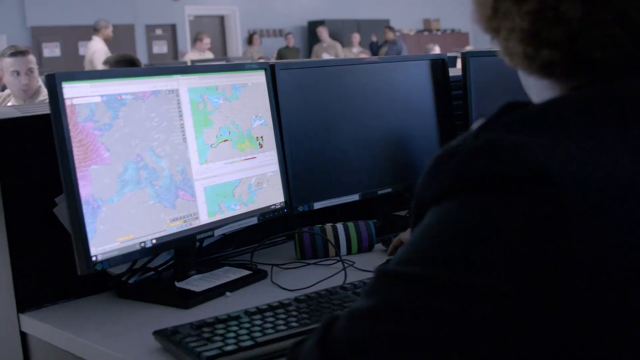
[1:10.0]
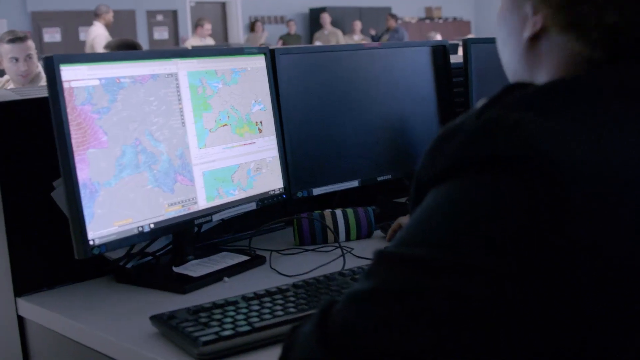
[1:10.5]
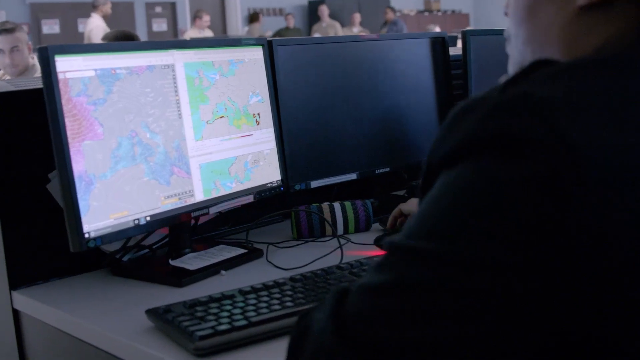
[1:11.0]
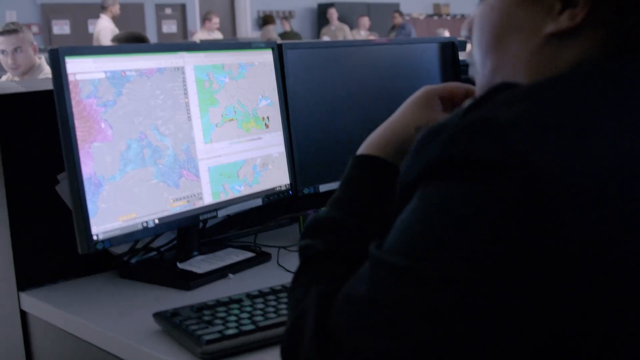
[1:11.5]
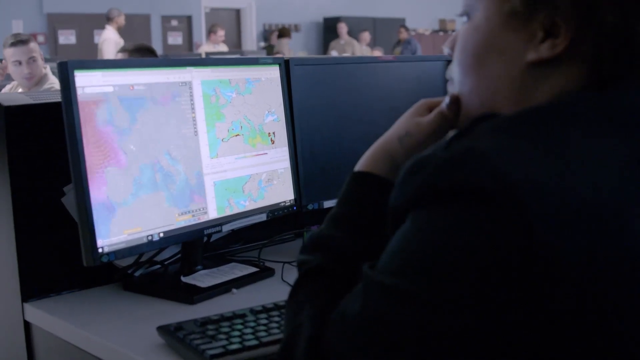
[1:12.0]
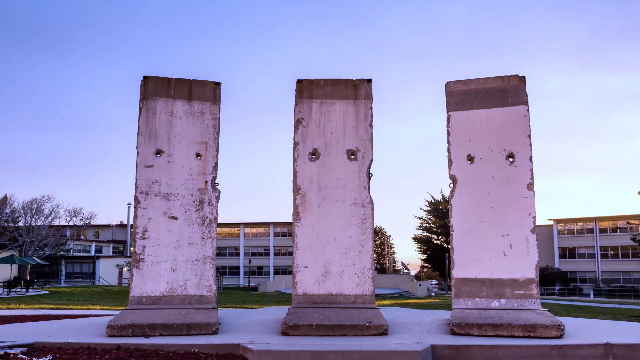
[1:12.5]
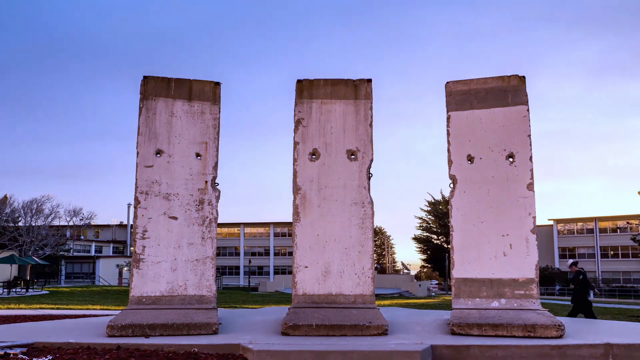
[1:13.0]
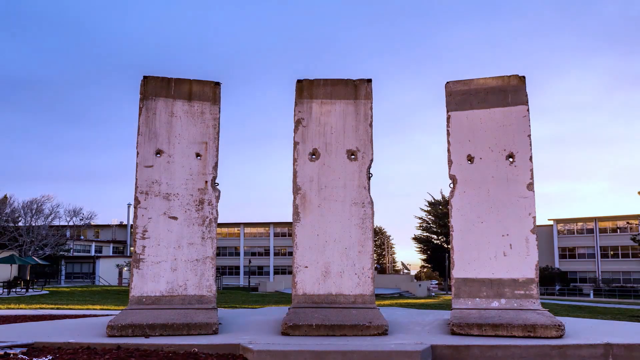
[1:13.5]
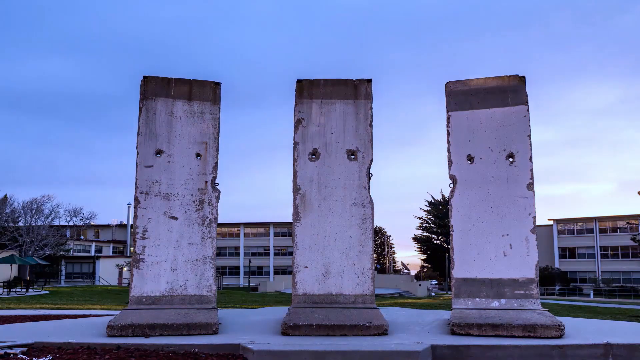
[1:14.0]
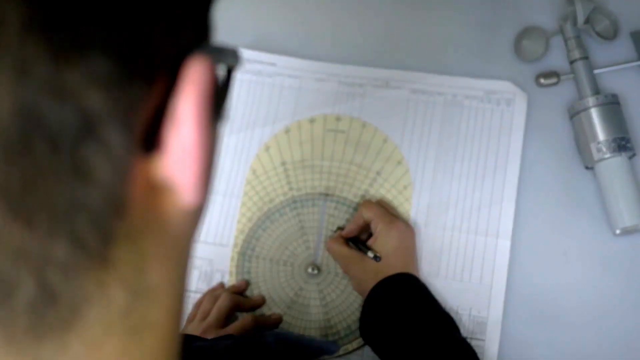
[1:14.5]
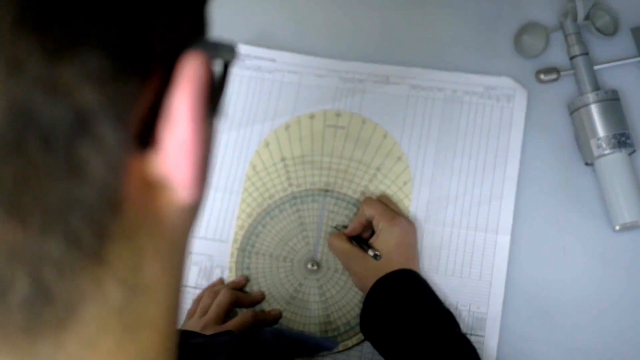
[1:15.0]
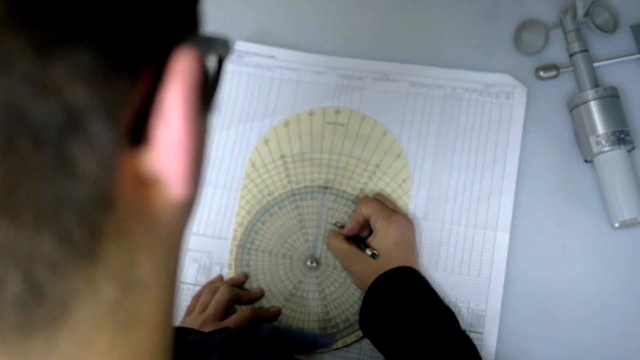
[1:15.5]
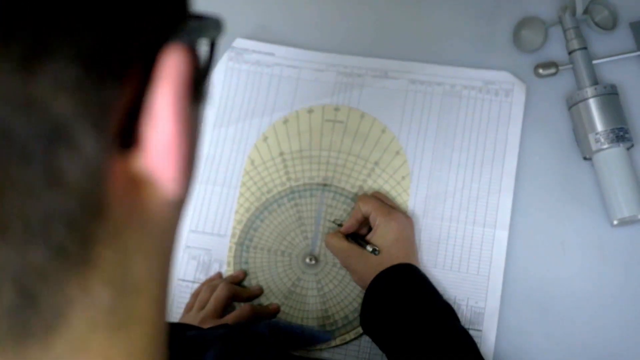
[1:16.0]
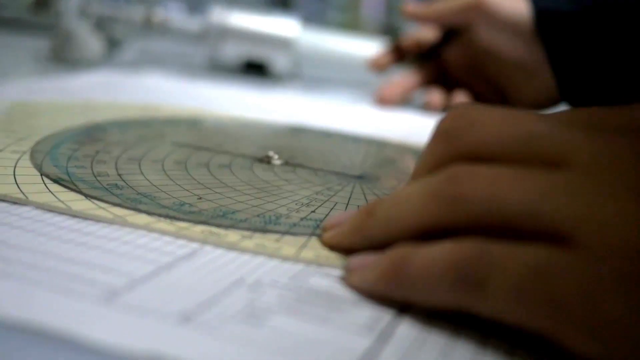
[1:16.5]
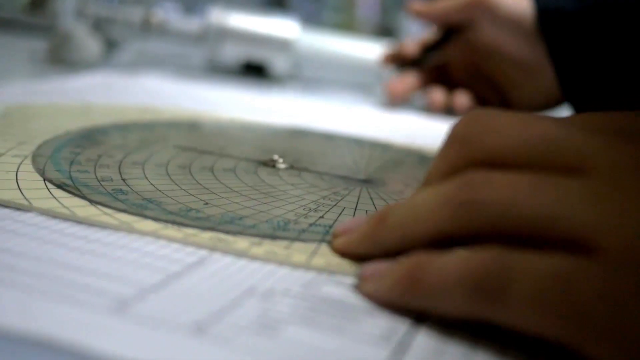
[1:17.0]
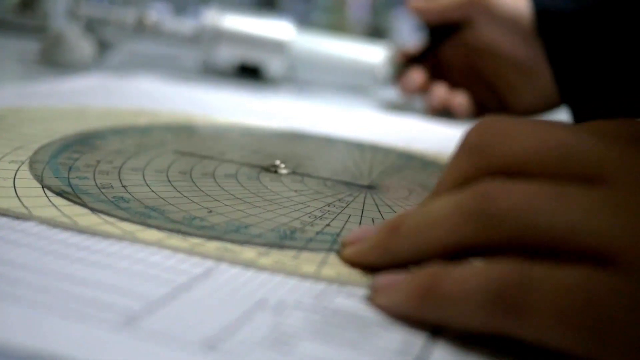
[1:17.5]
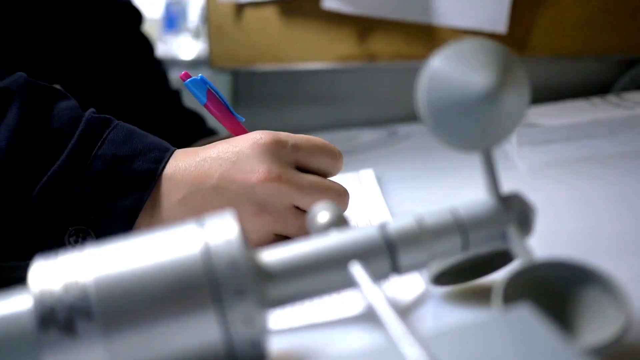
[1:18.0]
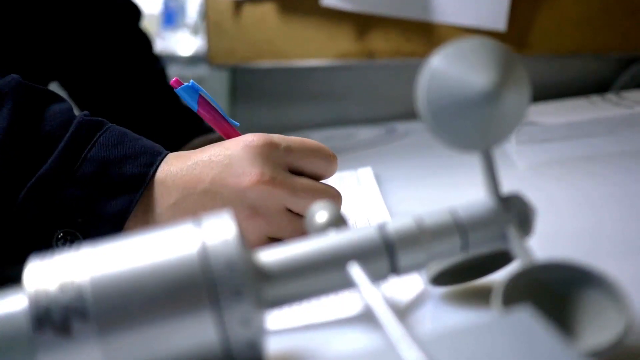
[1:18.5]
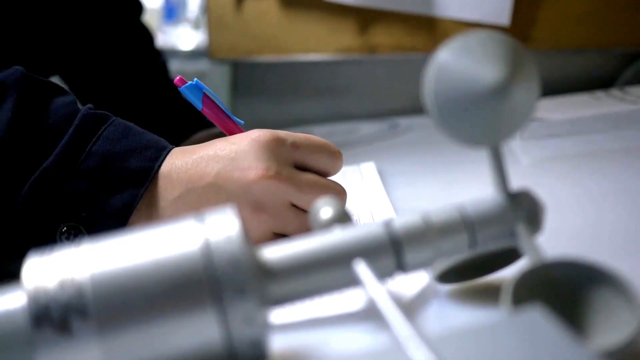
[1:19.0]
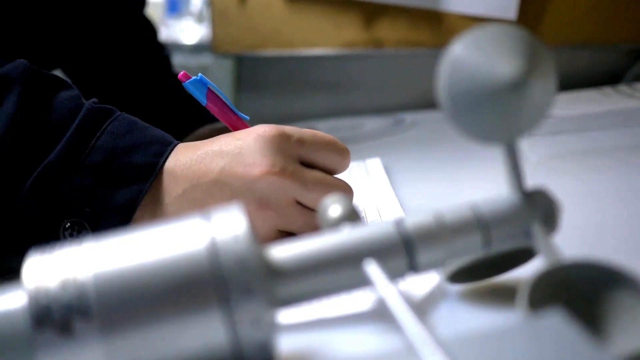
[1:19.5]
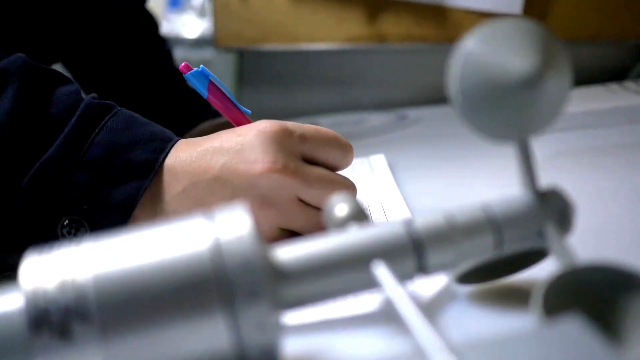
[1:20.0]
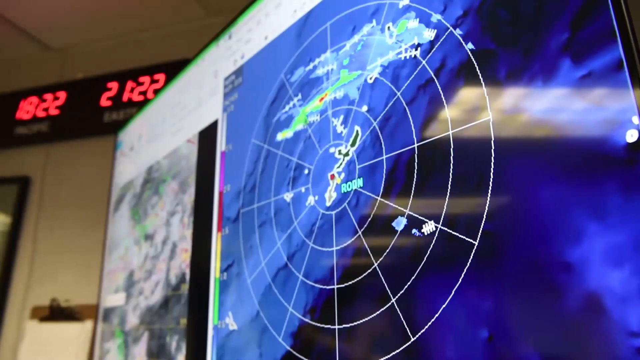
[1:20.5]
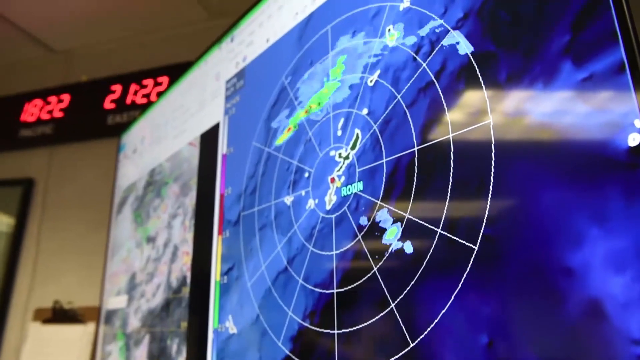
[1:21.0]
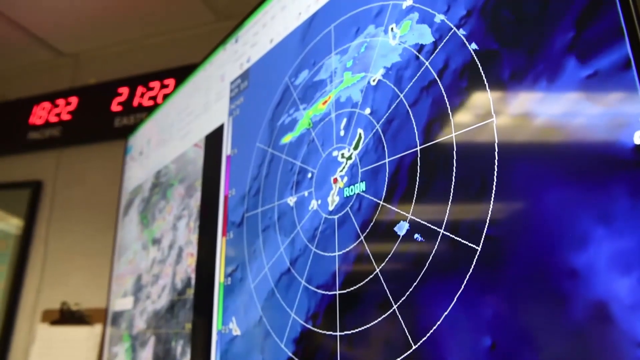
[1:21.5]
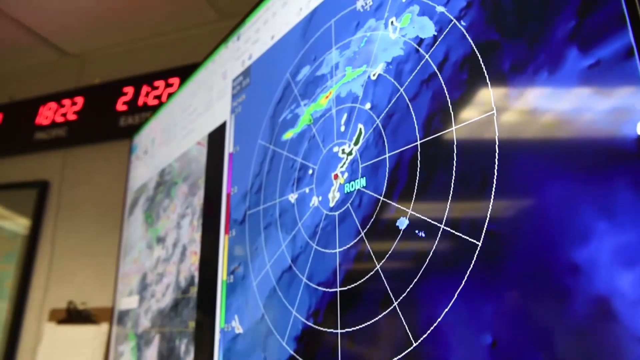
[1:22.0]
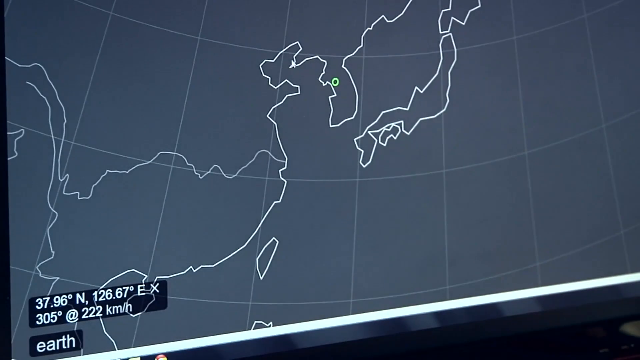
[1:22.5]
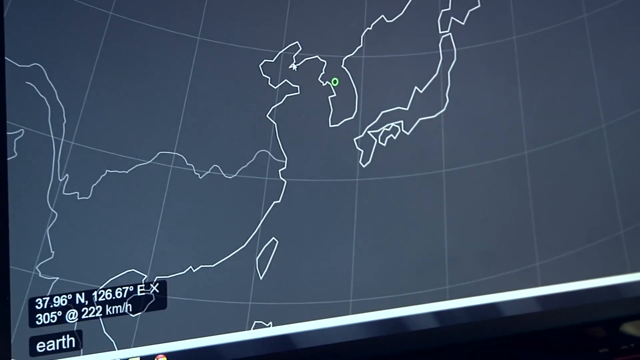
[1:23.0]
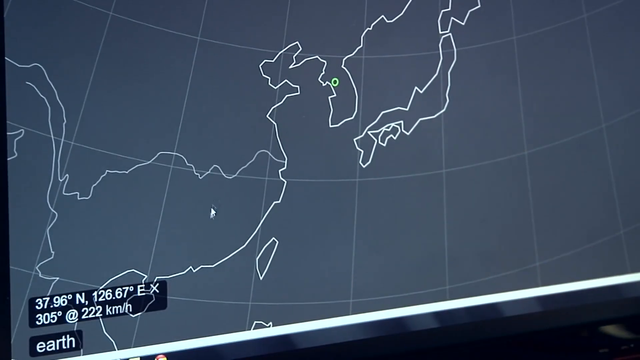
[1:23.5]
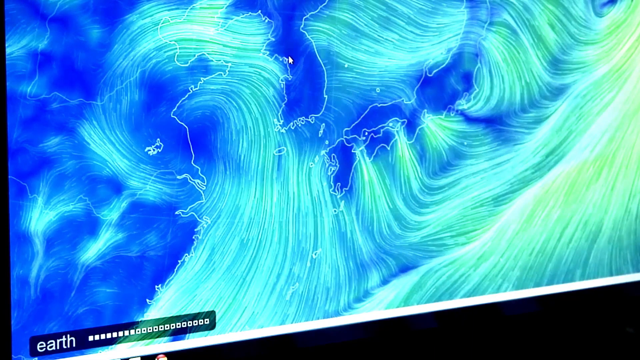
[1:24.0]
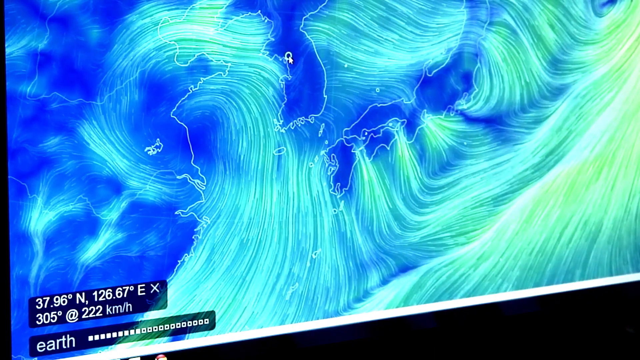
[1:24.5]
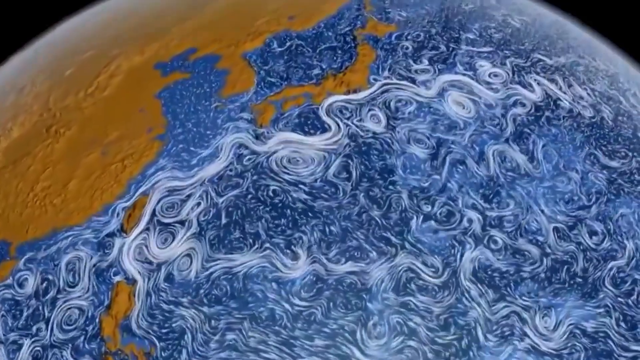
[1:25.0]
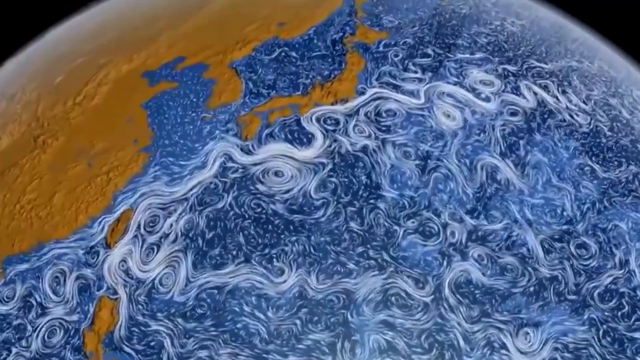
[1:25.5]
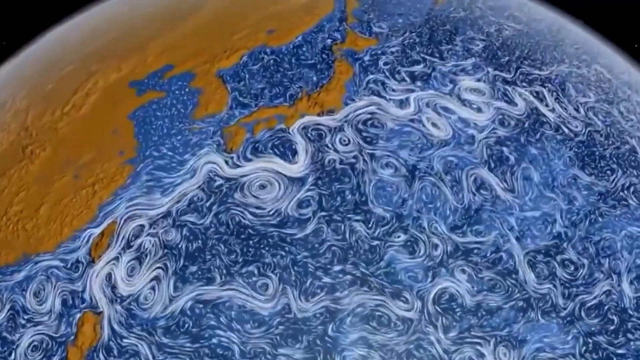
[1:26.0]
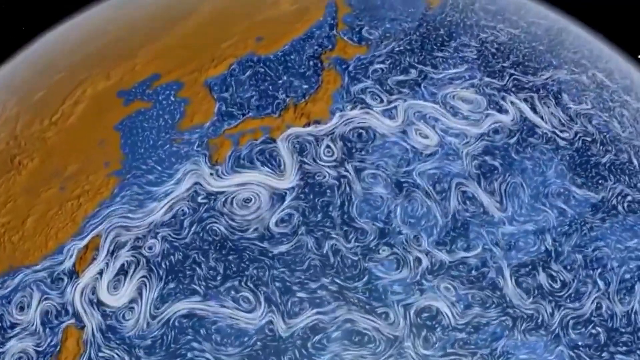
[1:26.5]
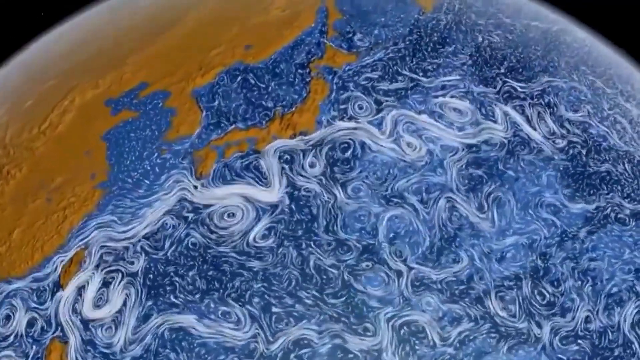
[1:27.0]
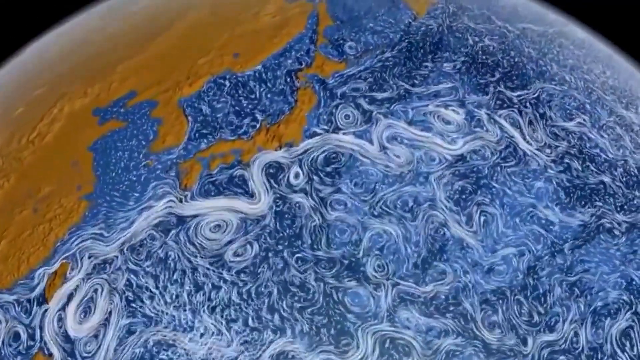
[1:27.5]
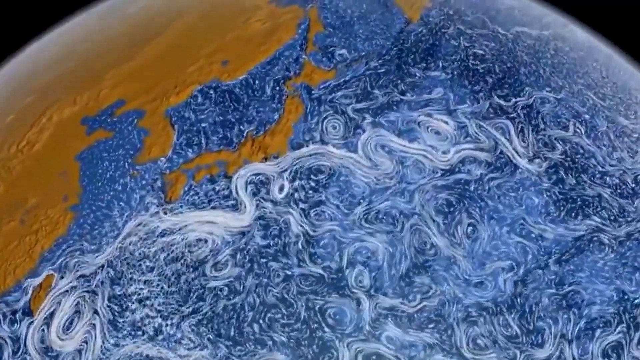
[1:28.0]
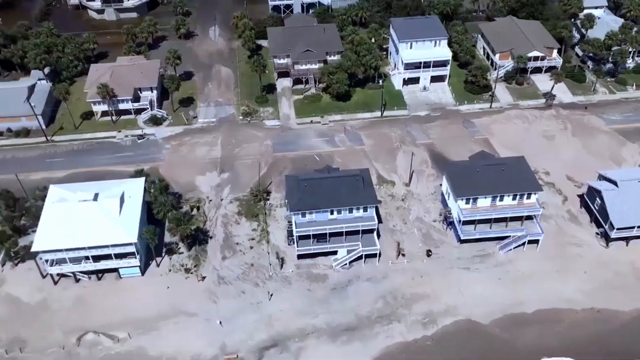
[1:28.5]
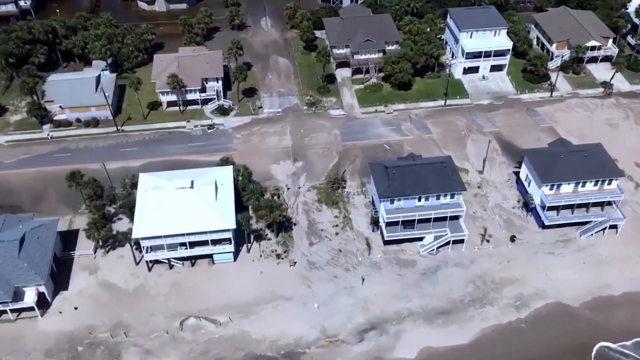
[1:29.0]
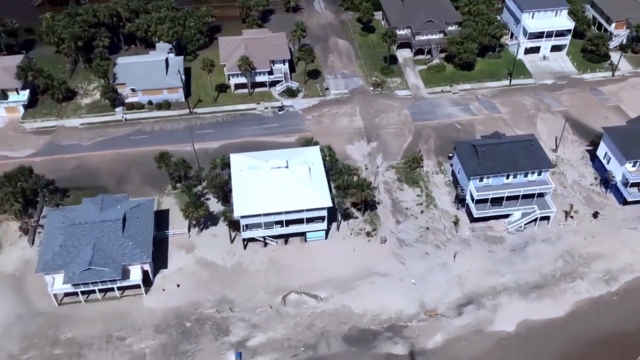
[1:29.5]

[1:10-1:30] More people look at computers. The video cuts to three boards up in the sky with white paint on them that look somewhat like they have eyes. A man seems to be making something in a circle, and a shot of his hand shows him using a pink and blue pen. Squiggly lines appear over the earth, apparently showing weather patterns. The sequence ends with a shot panning above a group of homes.